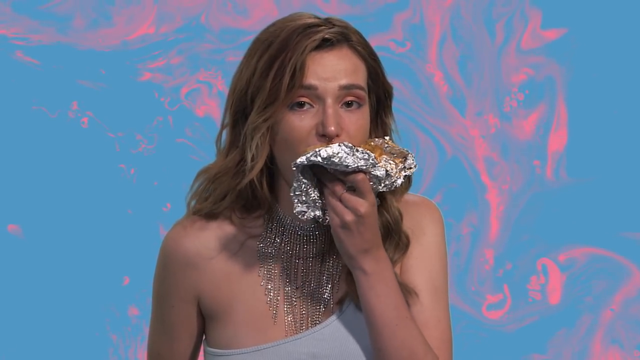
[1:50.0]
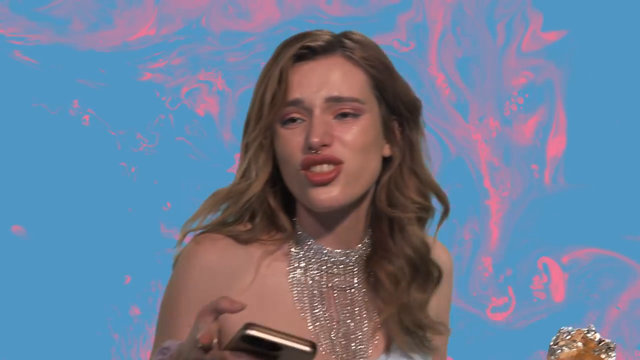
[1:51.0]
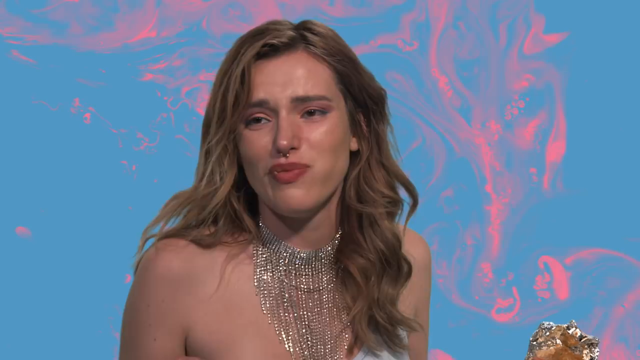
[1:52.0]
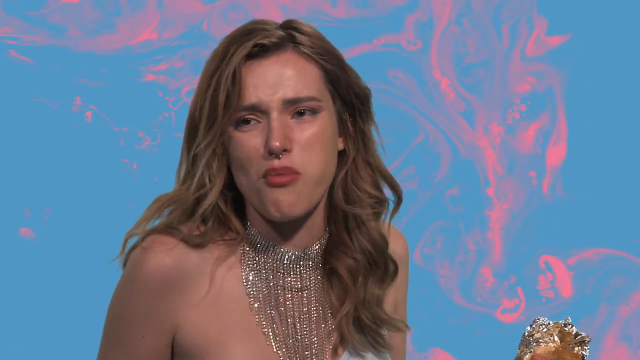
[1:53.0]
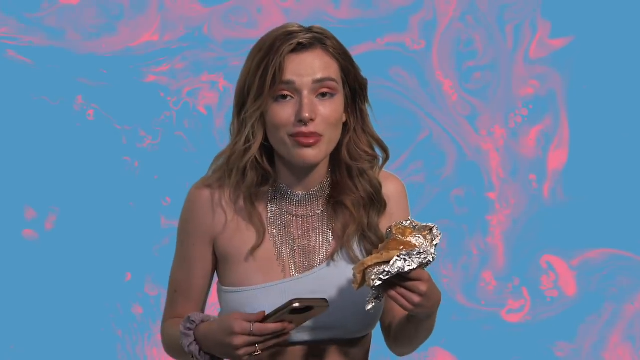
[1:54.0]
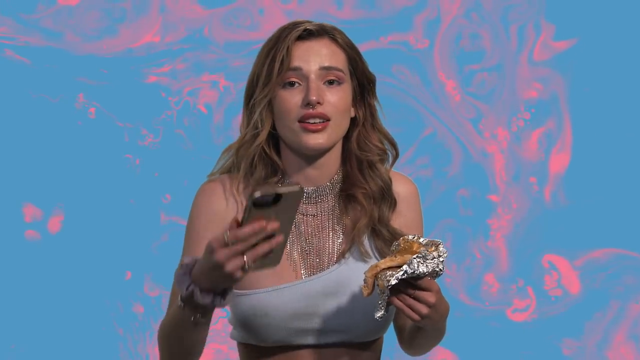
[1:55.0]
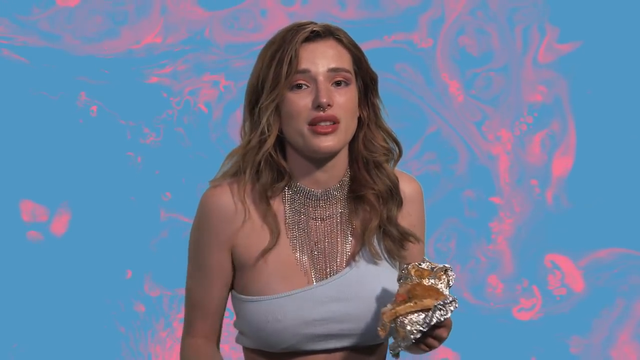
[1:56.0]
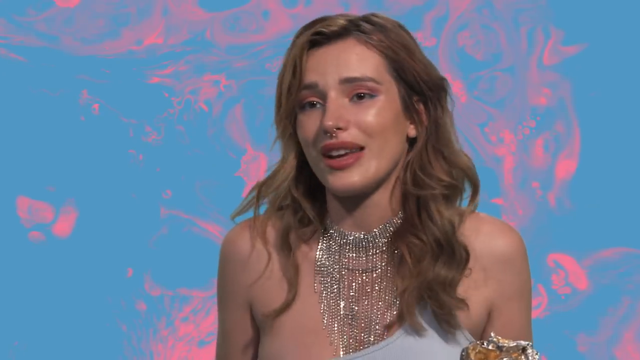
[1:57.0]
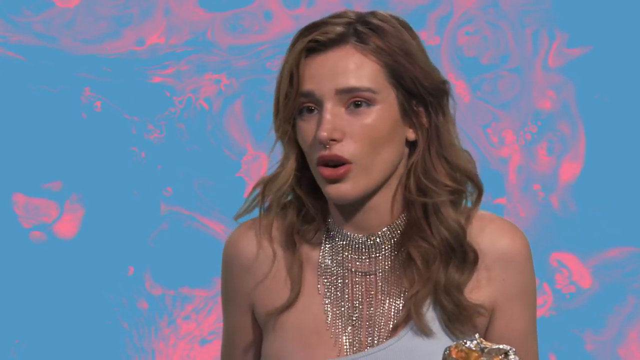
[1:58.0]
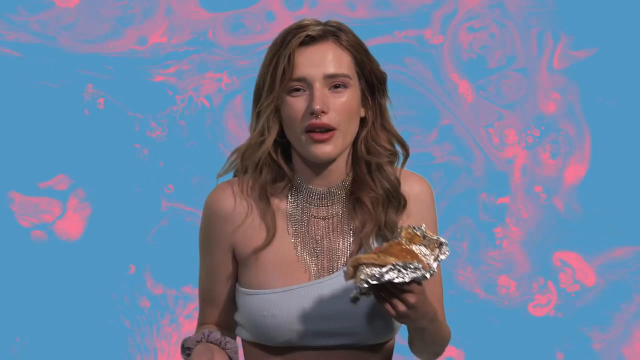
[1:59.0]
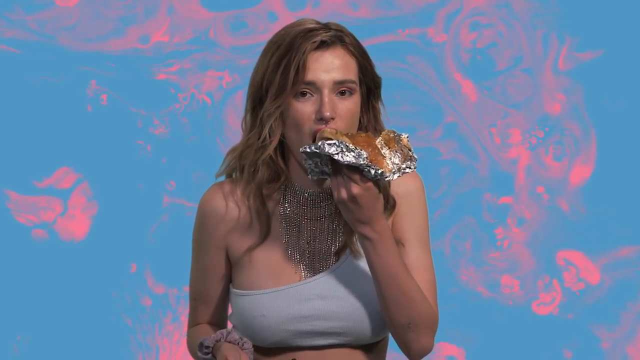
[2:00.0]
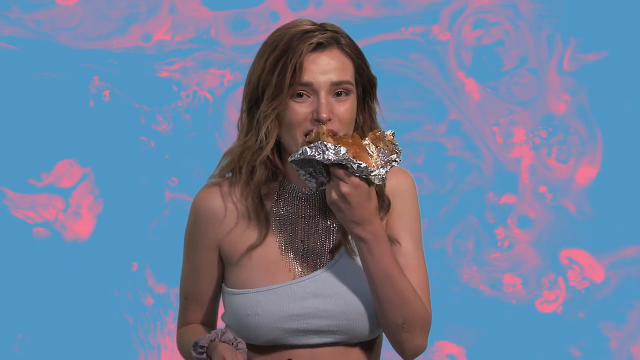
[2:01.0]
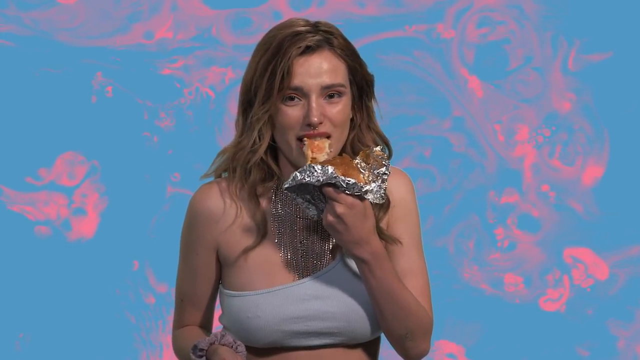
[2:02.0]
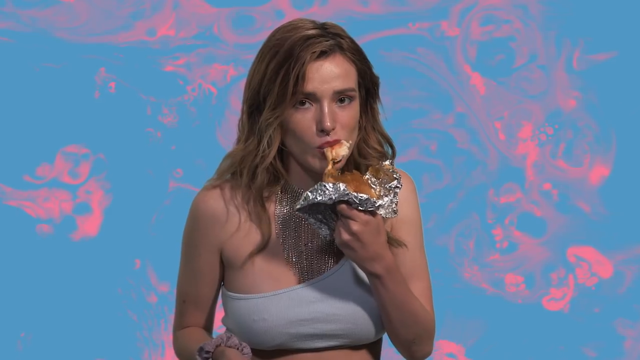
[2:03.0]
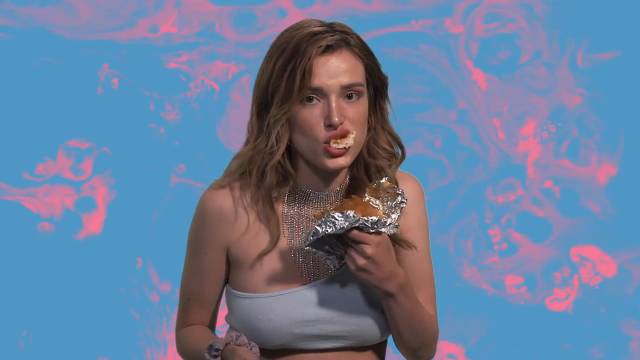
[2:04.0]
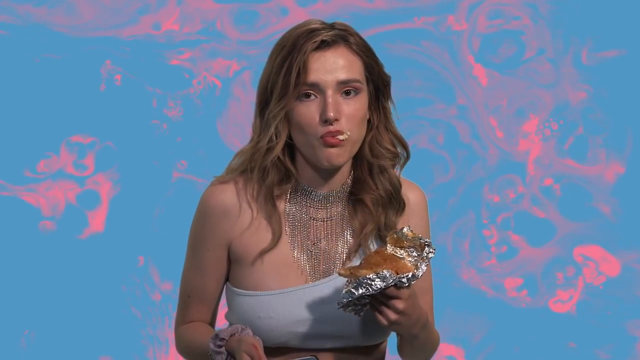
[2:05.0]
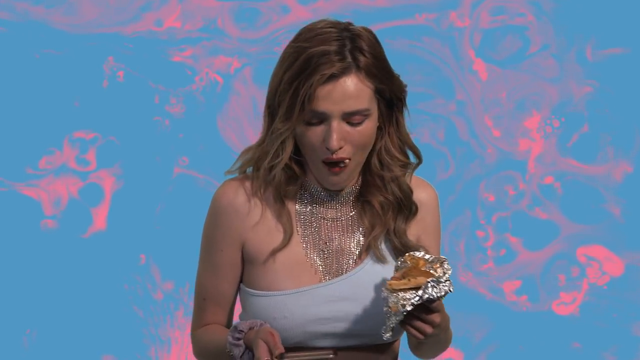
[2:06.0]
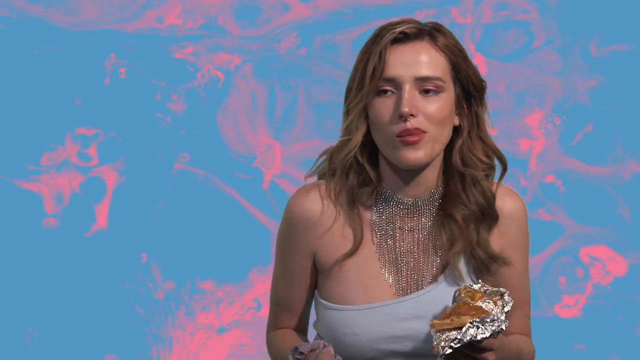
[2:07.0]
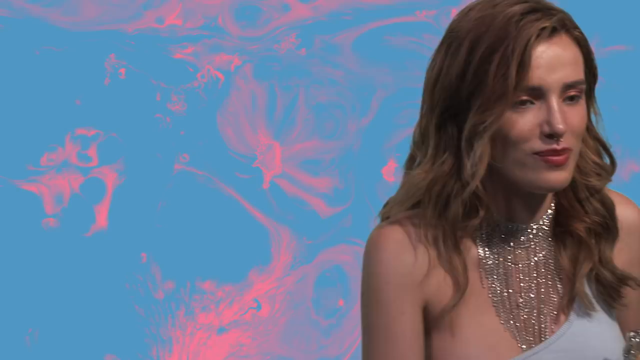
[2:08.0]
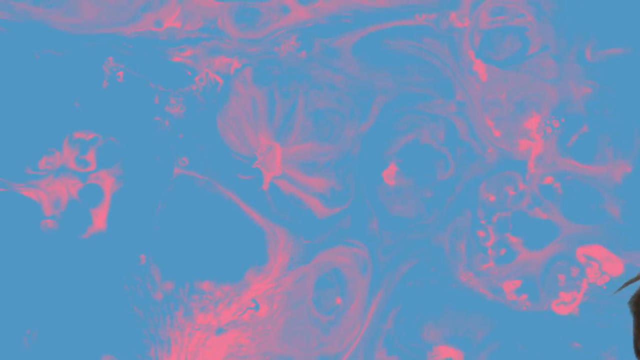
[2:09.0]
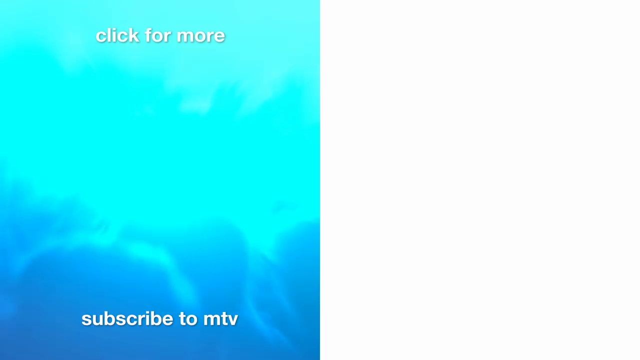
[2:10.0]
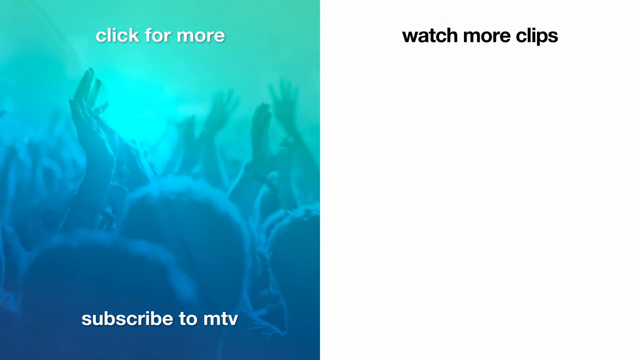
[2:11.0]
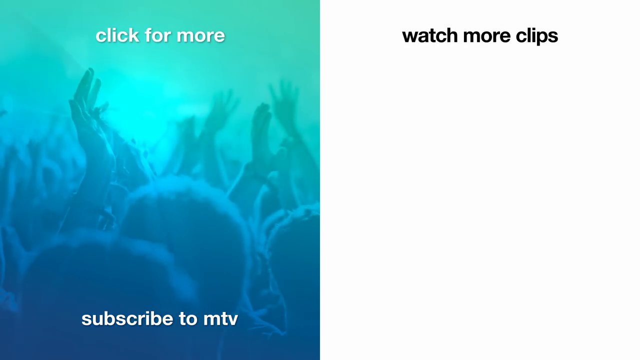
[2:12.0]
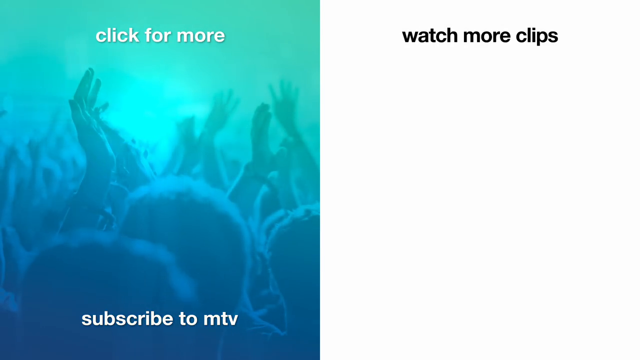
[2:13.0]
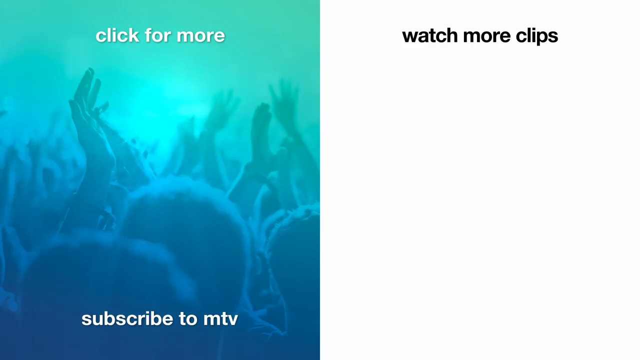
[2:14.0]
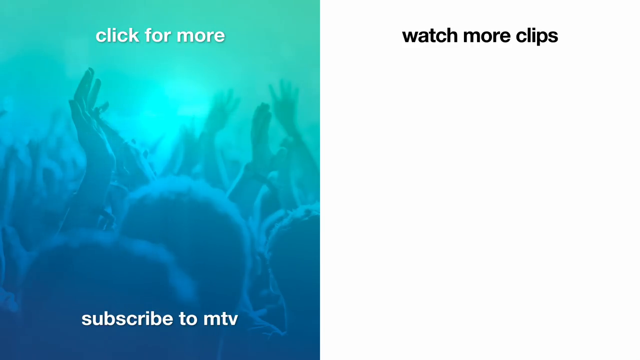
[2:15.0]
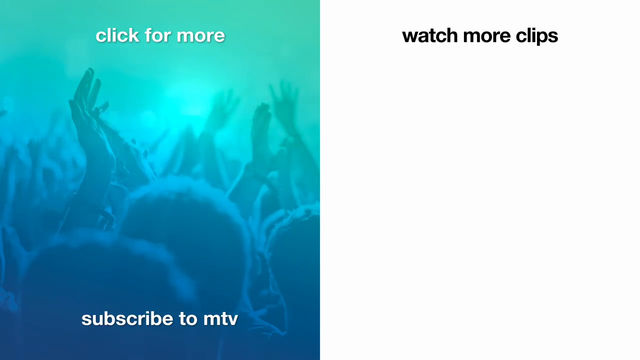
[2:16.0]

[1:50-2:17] Bella Thorne apparently uses bad language, as a hot dog emoji covers her mouth, seemingly as censorship. She talks to the camera, continues eating the hot dog, stops looking at the phone in her right hand, and looks straight at the camera while holding and eating the hot dog. After chewing, she walks off behind the camera, probably handing the phone to another person, and credits roll. An end screen follows showing MTV: the right side has a white background with black letters, and the left side says "click for more" and "subscribe to MTV," over a turquoise background with people holding their hands up as if at a concert or in a club.